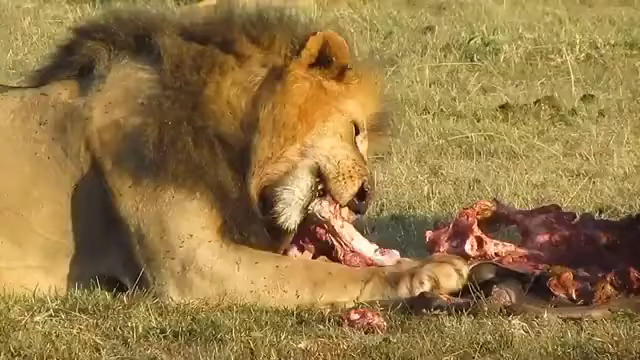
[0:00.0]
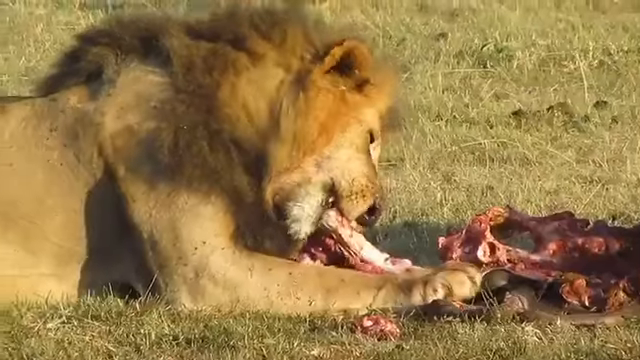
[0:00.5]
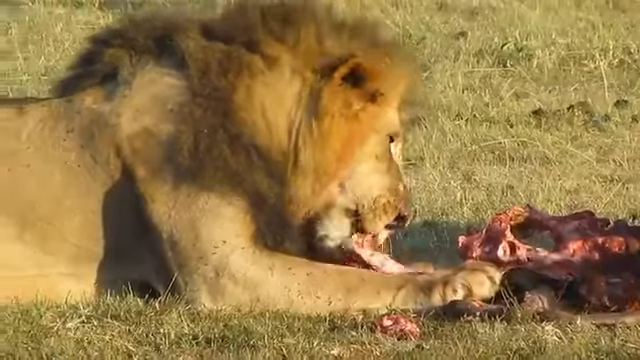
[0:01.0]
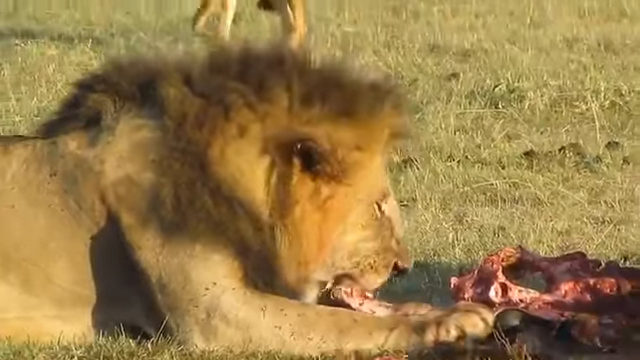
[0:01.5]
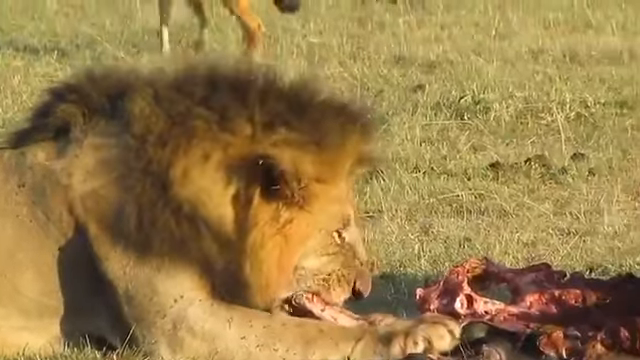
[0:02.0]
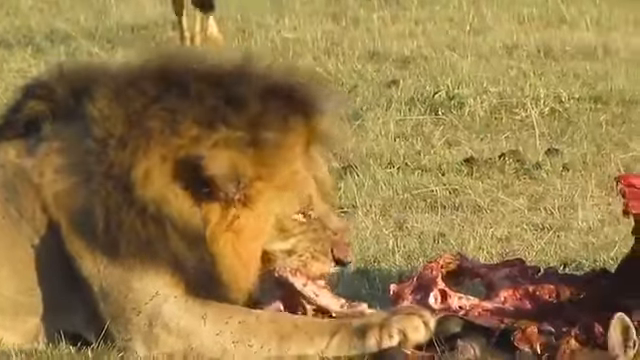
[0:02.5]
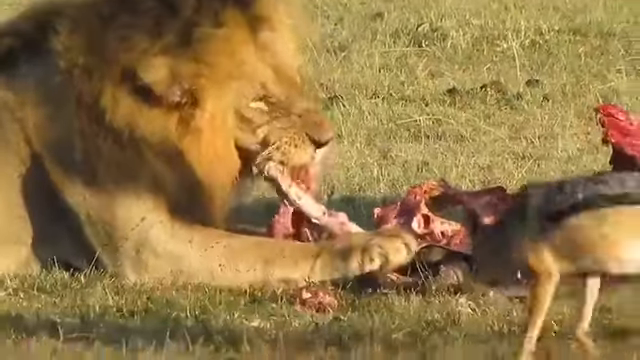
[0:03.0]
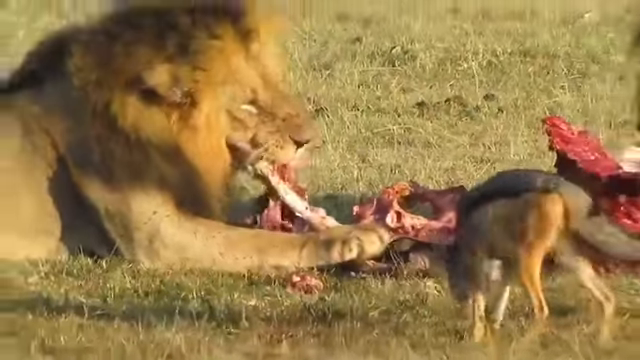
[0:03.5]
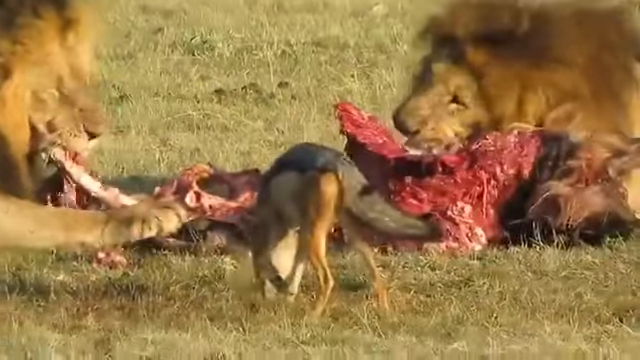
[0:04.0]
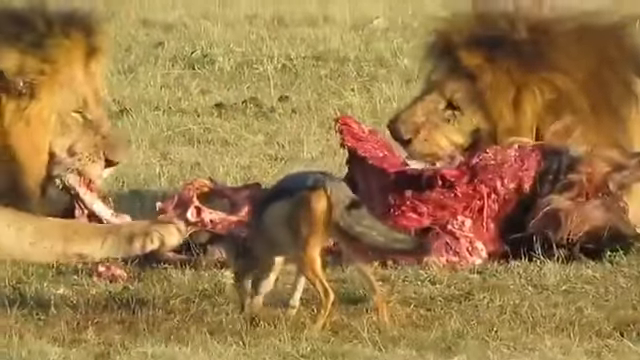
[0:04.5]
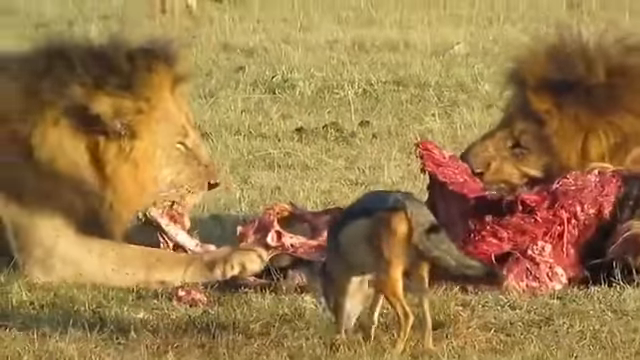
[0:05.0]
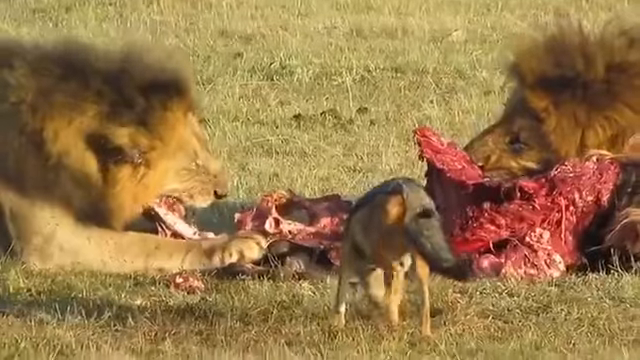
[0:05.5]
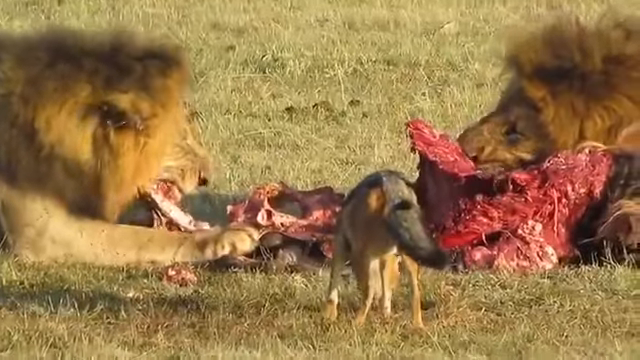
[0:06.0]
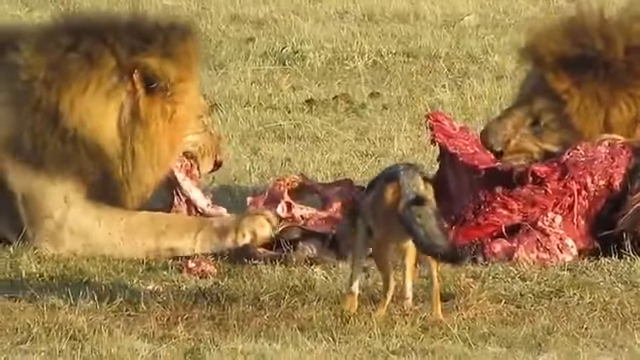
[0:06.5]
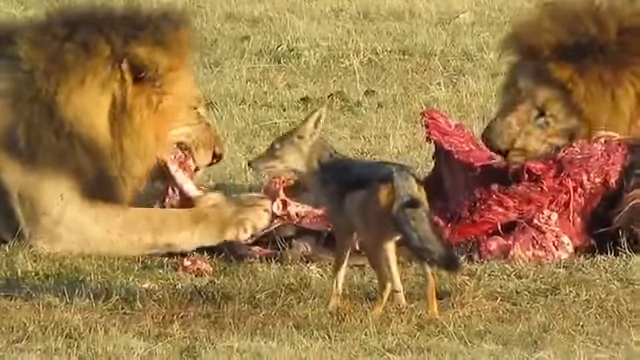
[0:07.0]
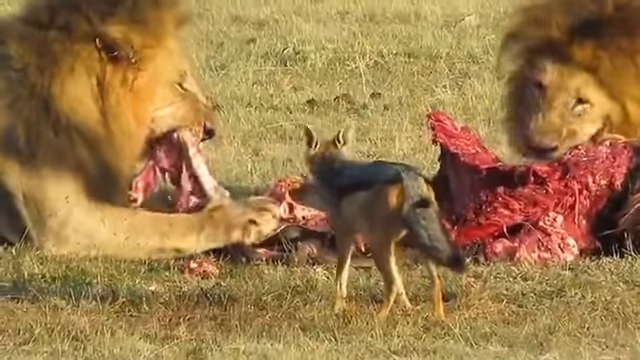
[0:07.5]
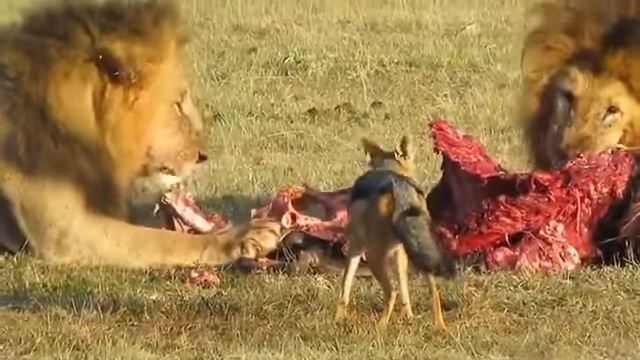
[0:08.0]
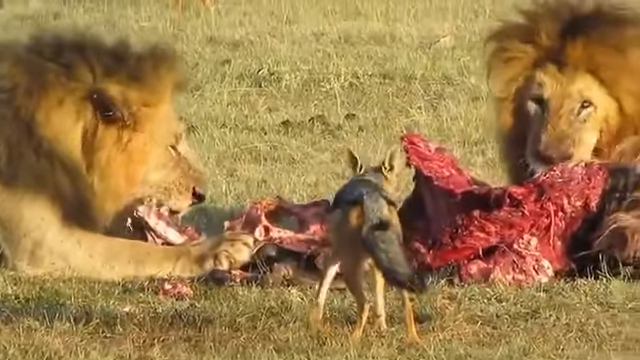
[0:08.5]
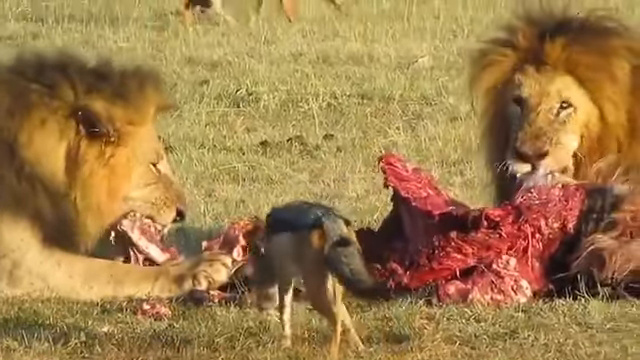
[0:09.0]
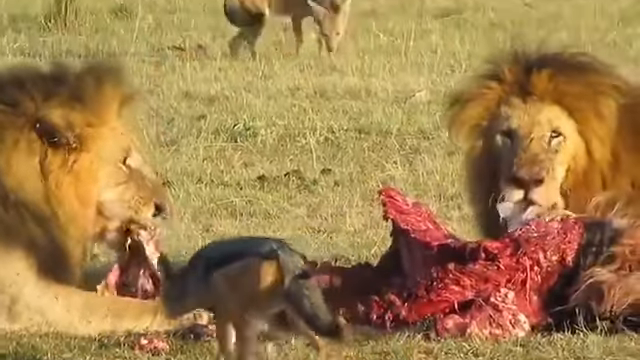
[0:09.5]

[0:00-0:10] A large male lion feeds on the carcass of some wild animal that was caught, busy chewing. The camera pans to the right, revealing another male lion also devouring the meat. Close by, what looks like a wild dog stands in the middle, observing the two lions eating and seemingly waiting for scraps. In the background, a second wild dog hovers and watches the lions. The grass is short, like the type seen in savannas. The lions look very large and powerful.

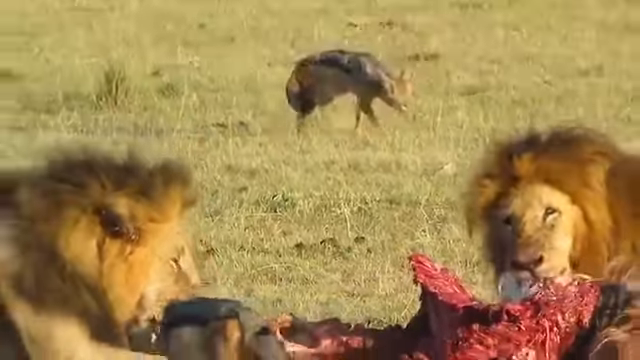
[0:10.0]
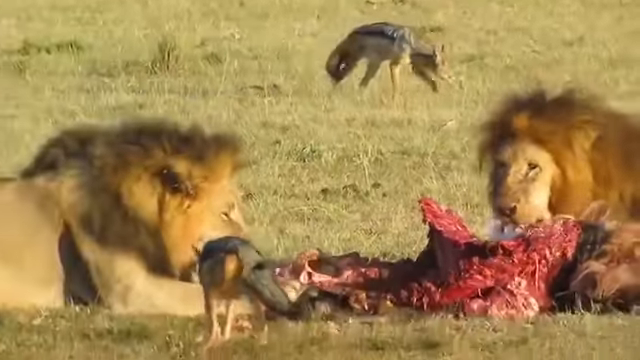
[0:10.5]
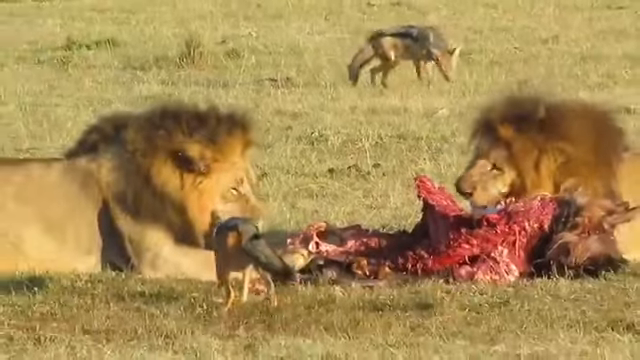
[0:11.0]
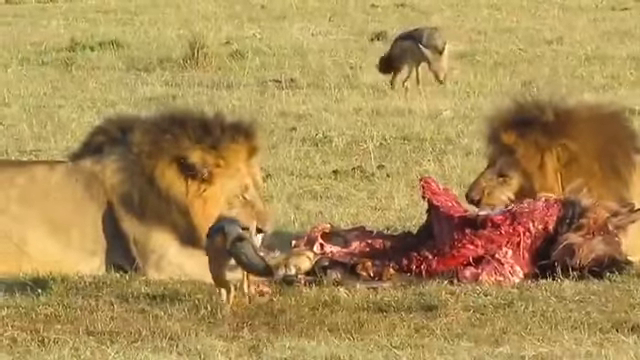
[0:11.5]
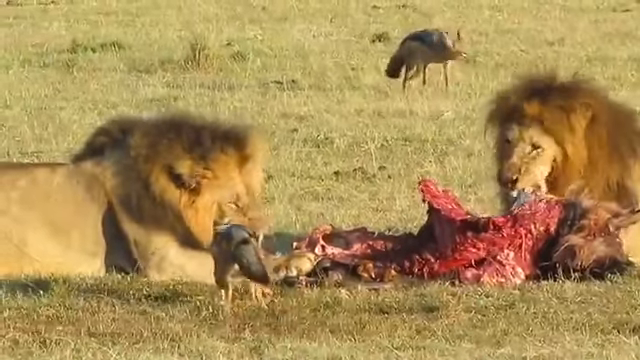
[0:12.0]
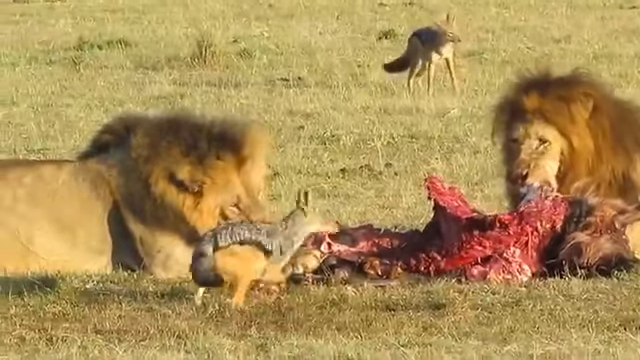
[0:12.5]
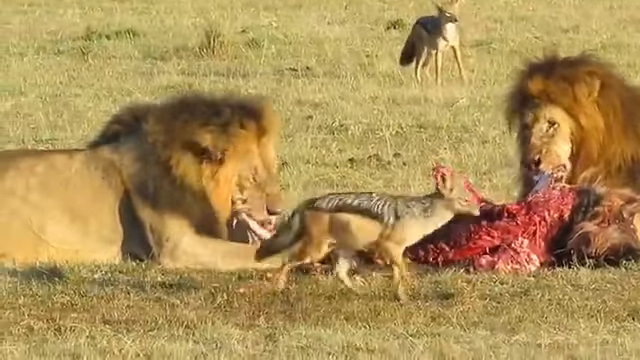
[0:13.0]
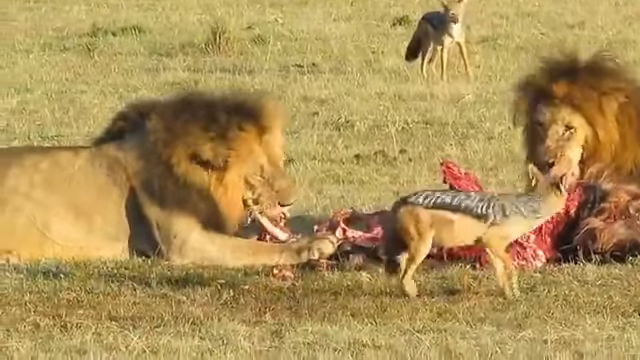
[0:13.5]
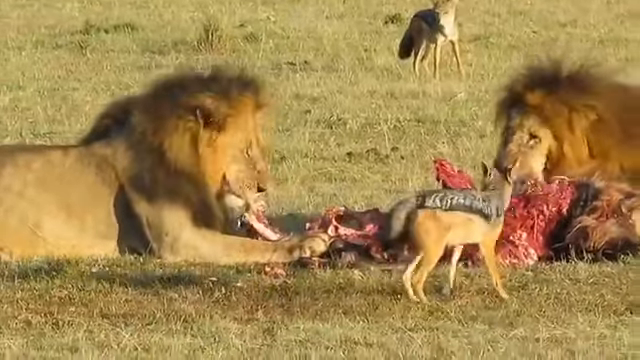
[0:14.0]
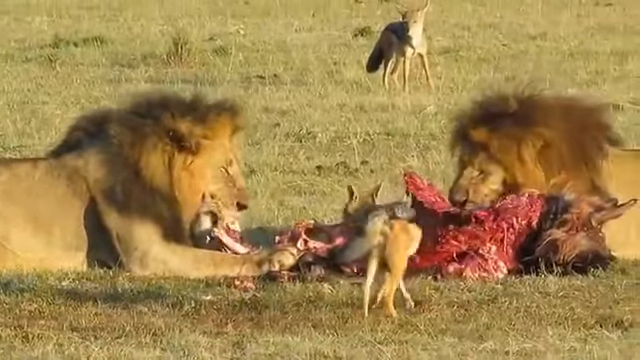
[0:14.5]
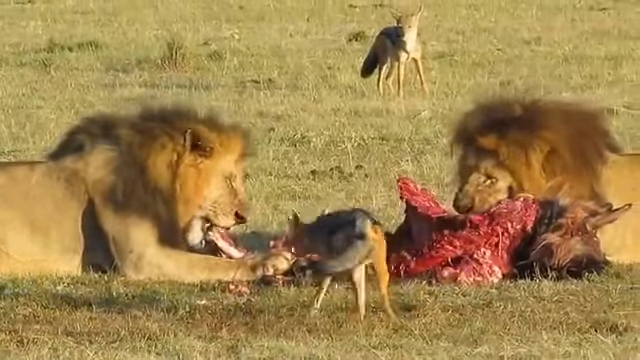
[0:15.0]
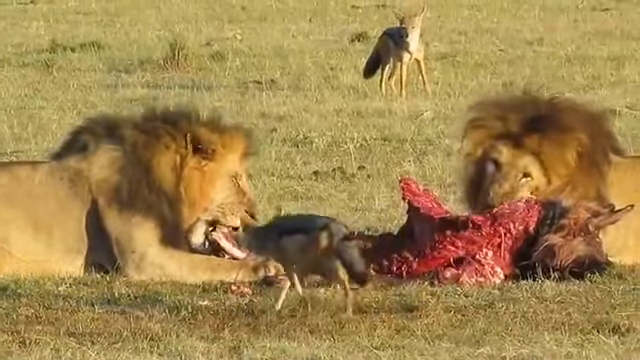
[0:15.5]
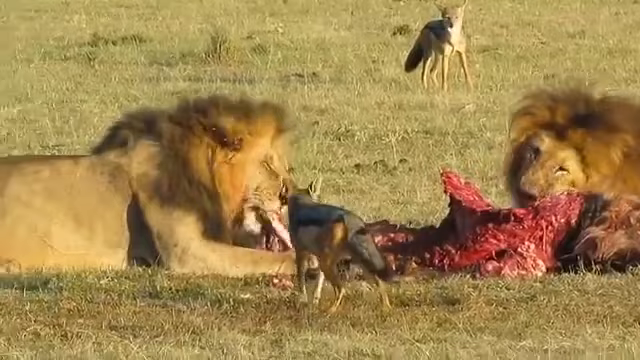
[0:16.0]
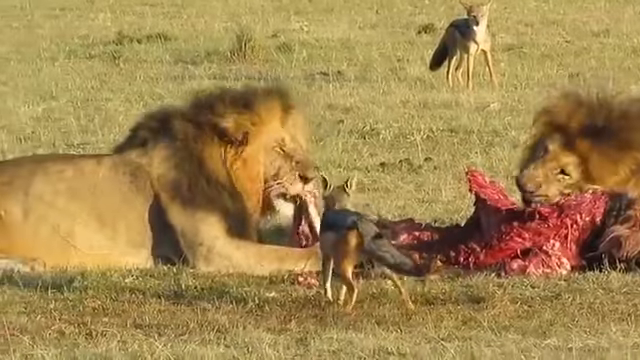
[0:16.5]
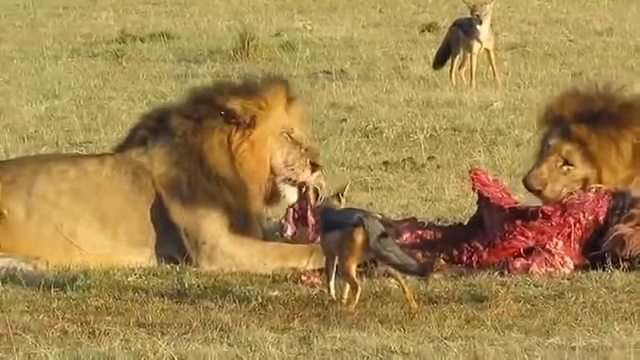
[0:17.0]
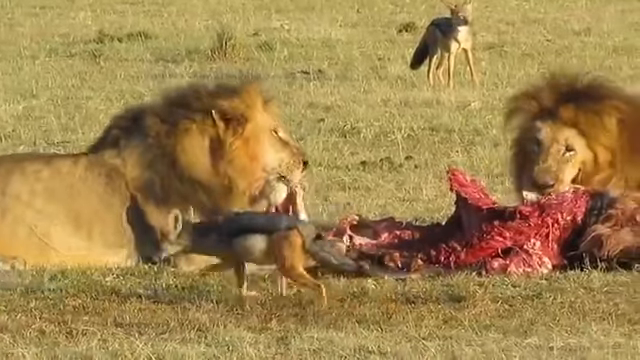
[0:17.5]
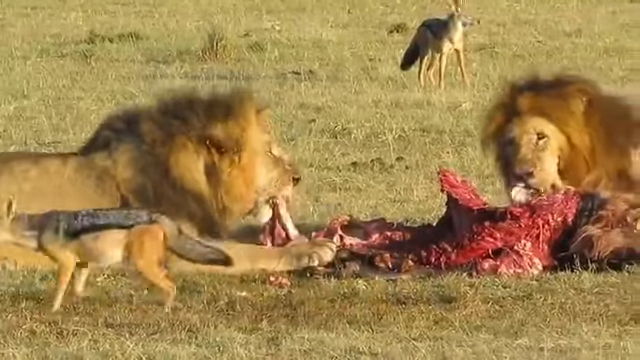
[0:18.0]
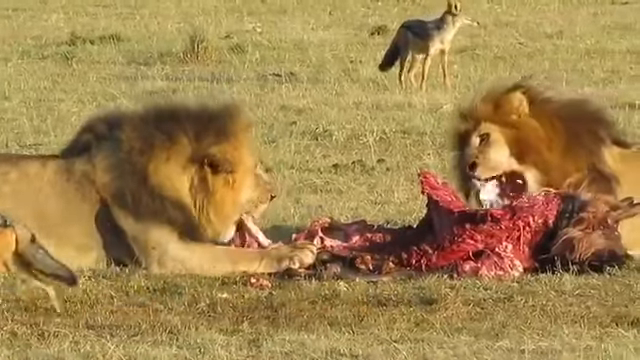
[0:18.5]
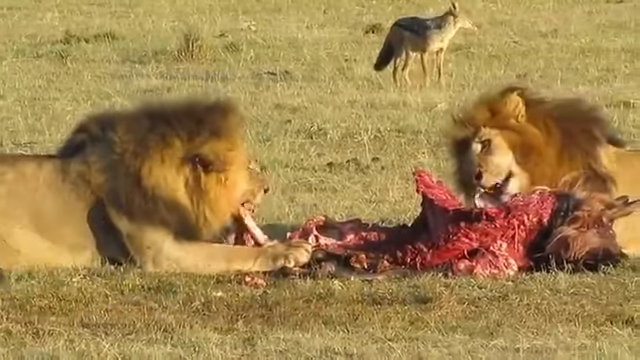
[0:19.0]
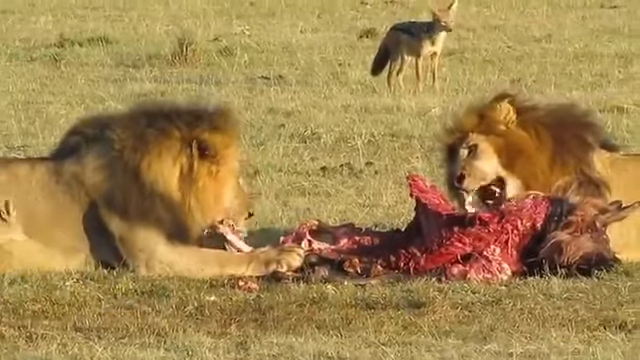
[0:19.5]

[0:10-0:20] Two lions eat in the wild. They have thick, light-colored manes that are not too long, suggesting they are young male lions. They feed off the carcass of some wild animal they had previously caught. In the background of the savannah, what looks like a wild dog hovers around as if waiting for its turn to eat, and another wild dog is in the foreground. The dogs walk around, apparently waiting for the lions to finish their meal to get some scraps. One of the dogs looks like it wants to approach the lions but thinks twice about it and walks off toward the left side of the frame.